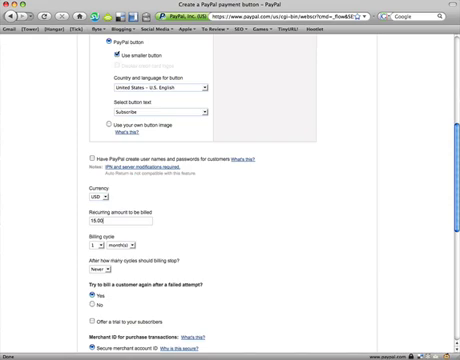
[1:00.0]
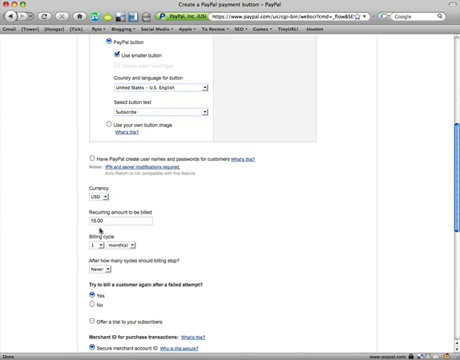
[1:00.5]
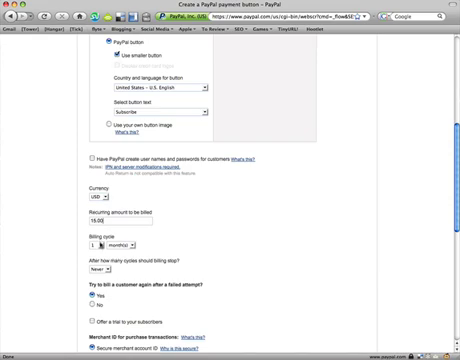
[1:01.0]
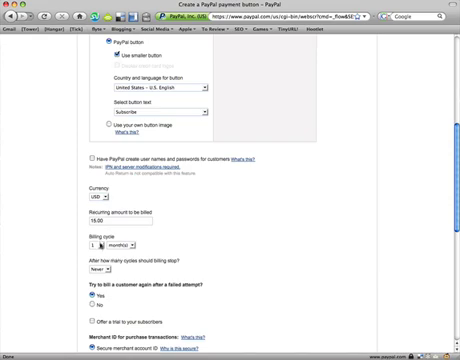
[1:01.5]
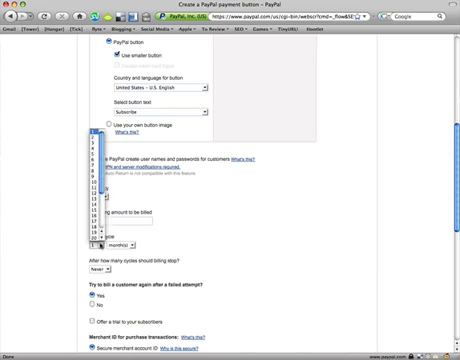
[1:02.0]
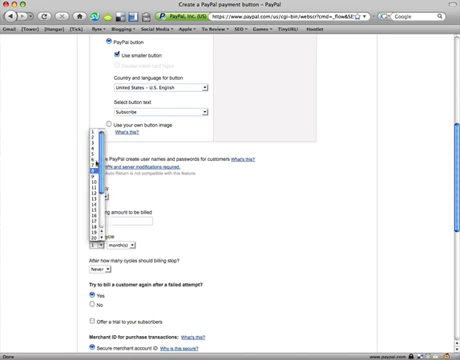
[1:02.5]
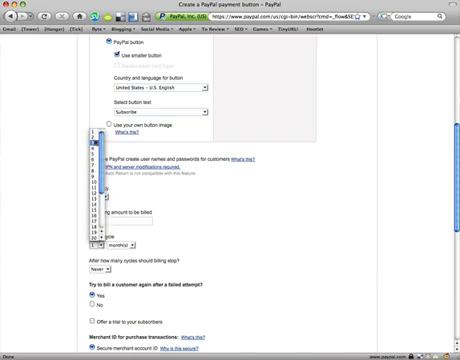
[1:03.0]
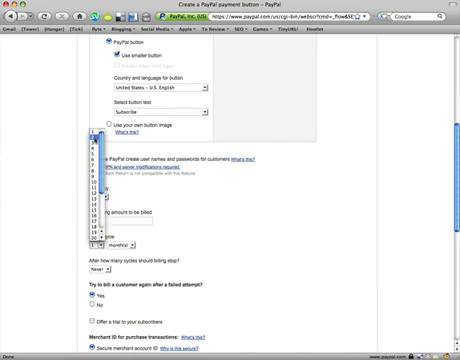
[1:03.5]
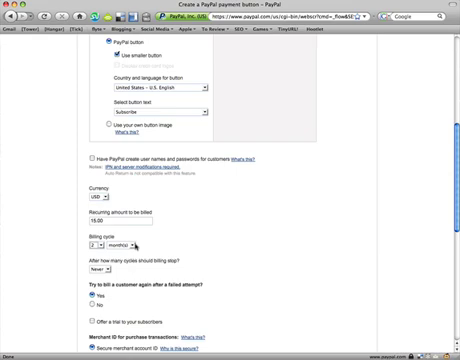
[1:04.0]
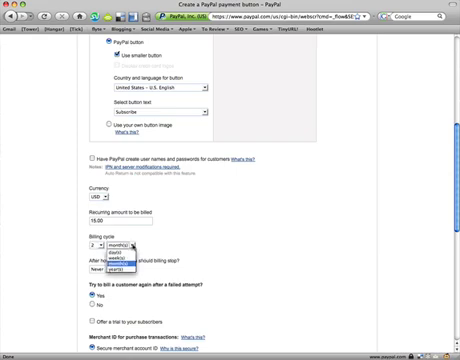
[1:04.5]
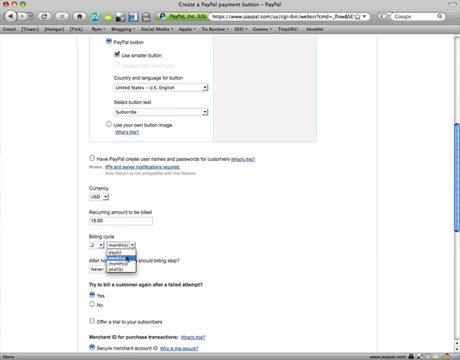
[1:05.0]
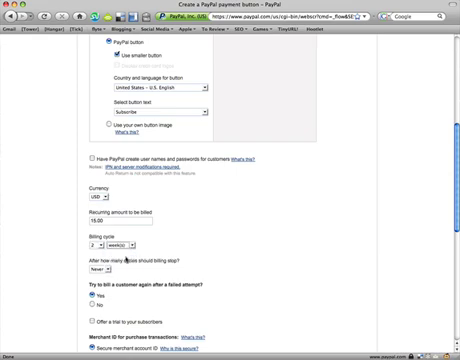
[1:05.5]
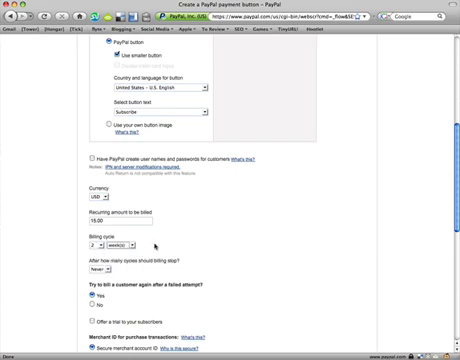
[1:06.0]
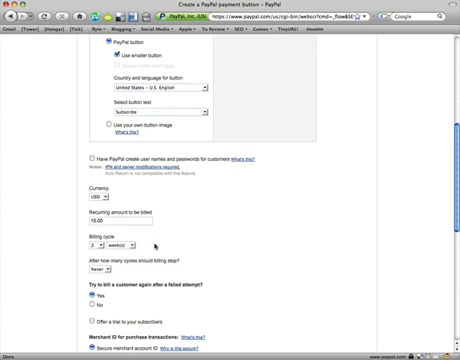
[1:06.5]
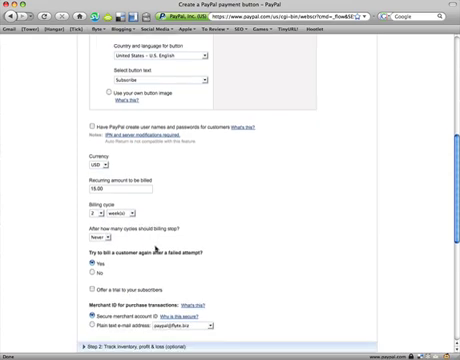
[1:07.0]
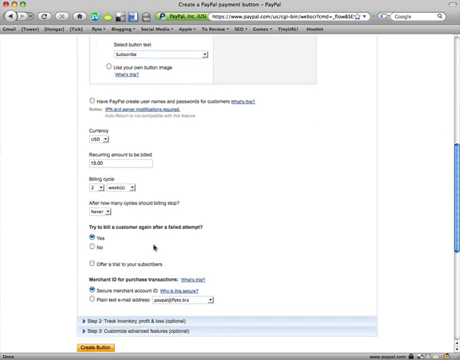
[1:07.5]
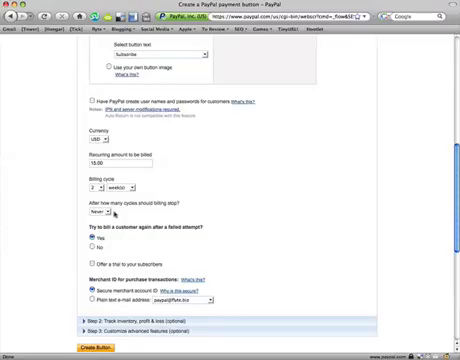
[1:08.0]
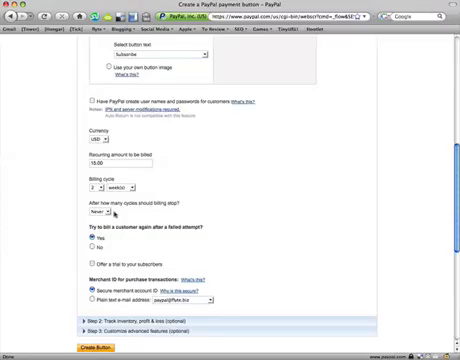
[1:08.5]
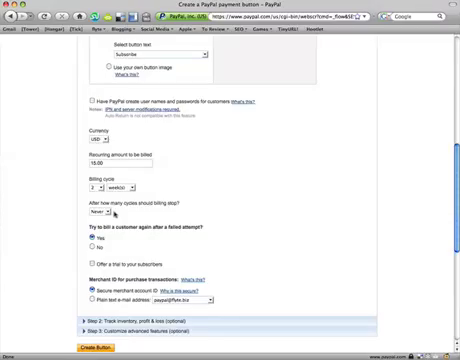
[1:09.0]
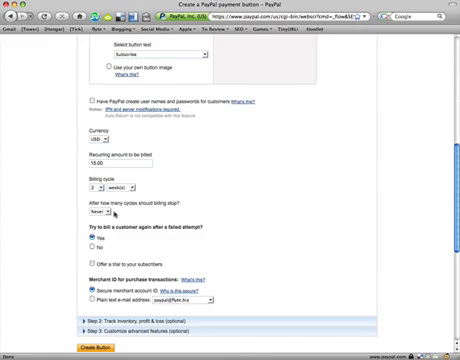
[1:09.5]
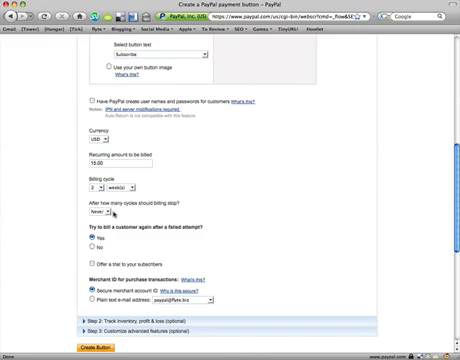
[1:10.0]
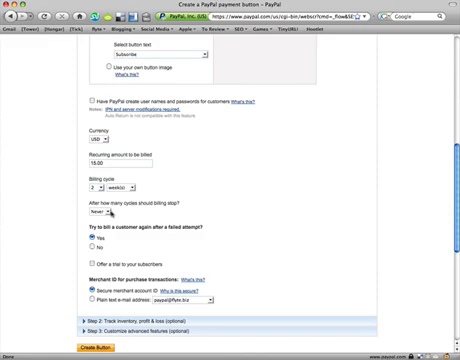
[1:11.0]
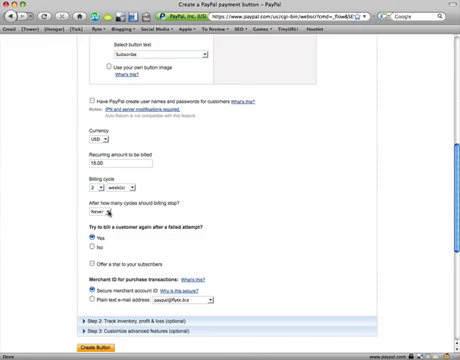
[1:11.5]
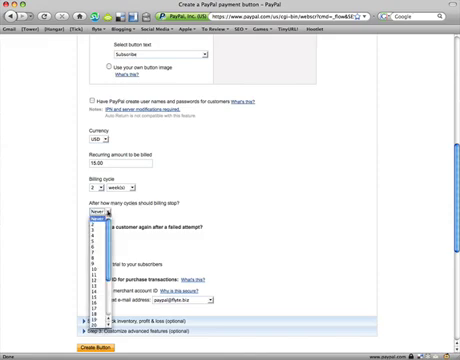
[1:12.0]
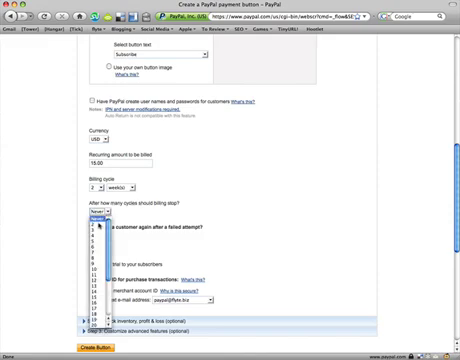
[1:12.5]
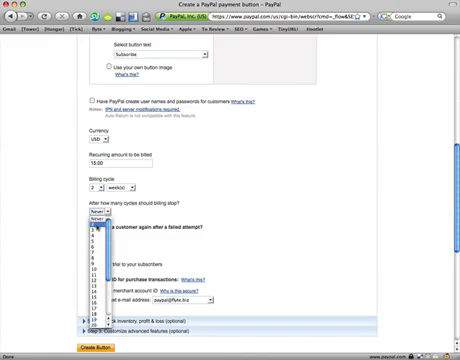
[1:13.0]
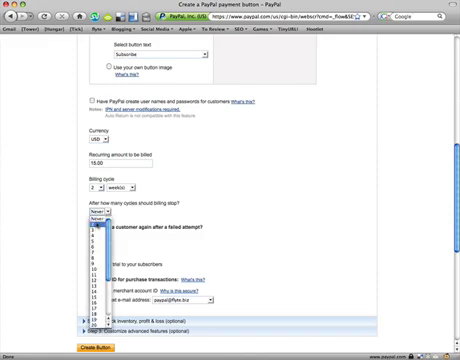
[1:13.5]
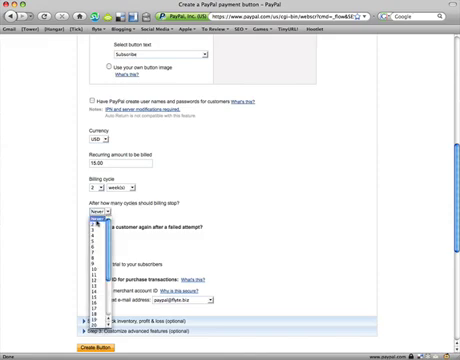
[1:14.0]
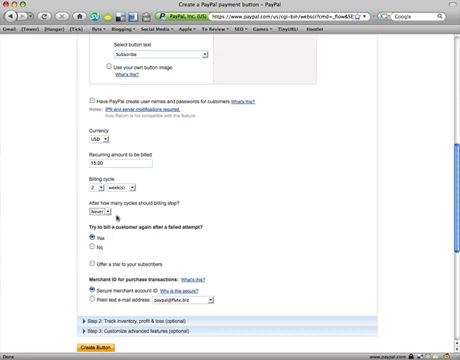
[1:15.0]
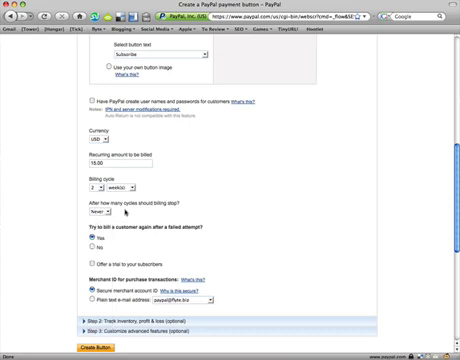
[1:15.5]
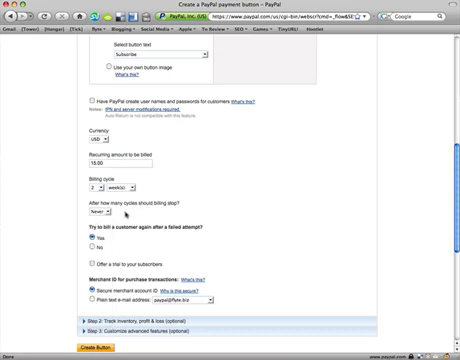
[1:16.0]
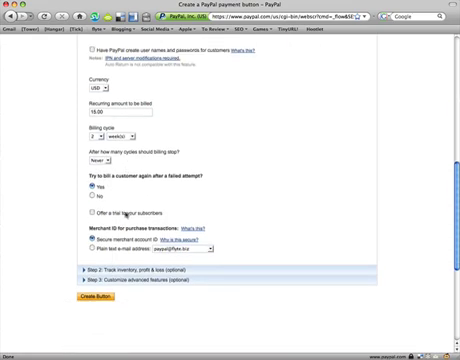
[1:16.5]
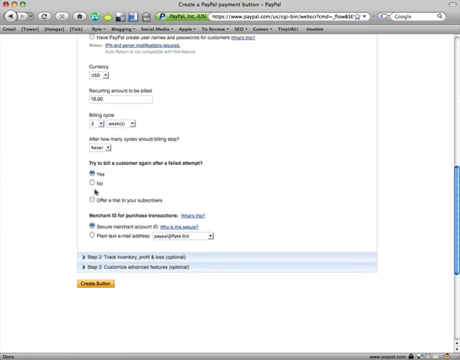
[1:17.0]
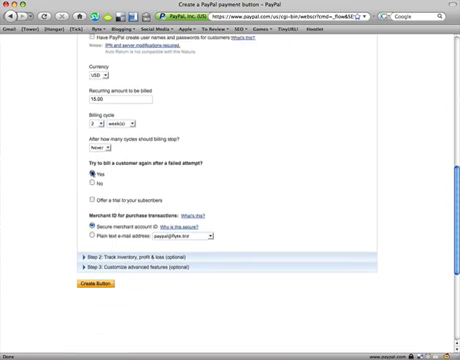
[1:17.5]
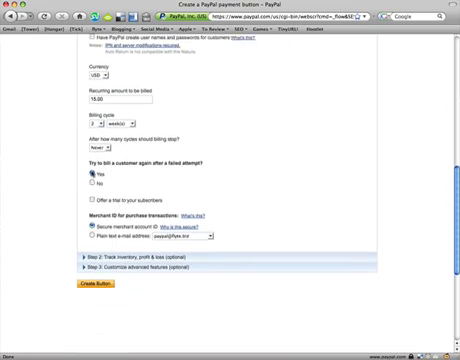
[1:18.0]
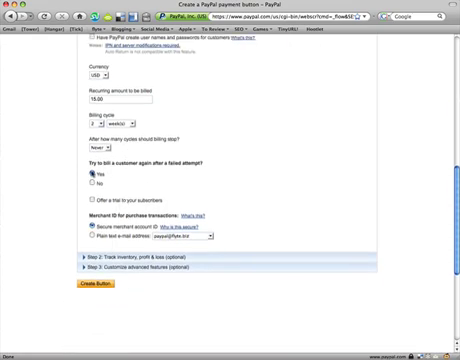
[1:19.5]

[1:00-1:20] The user clicks on the billing cycle drop-down menu and changes the billing cycle to two weeks. Next is an option to stop billing after a certain number of cycles; the current setting is "never," and the creator opens the drop-down menu to show the options but does not change the setting. There is then an option to try billing a customer again after a failed attempt, with the choices yes and no; yes is selected, indicated by a green-blue circle to the left of the label "yes." Near the bottom of the screen are two collapsible subsections in blue, each with a blue arrow pointing to the right, indicating they are collapsed. Step two is tracking inventory, profit and loss, which is optional, and step three is customizing advanced features, also optional. Below these two steps is a rectangular orange button that reads "create button" in black text.